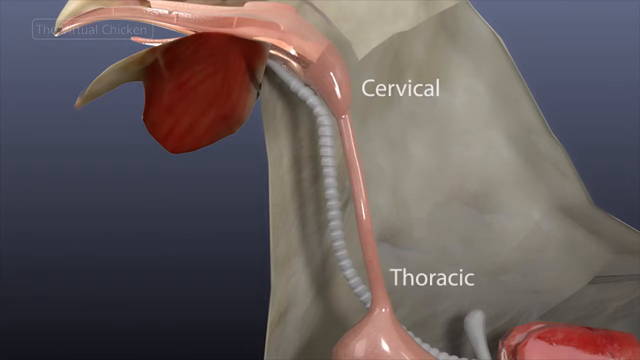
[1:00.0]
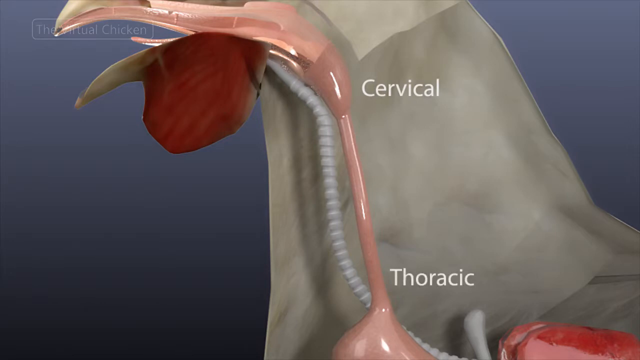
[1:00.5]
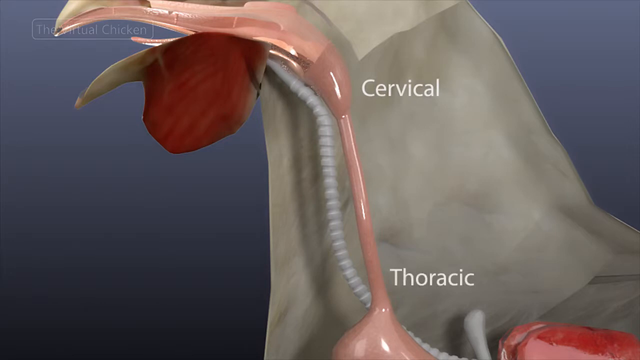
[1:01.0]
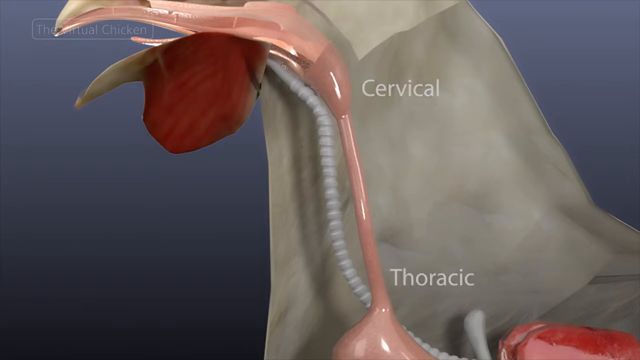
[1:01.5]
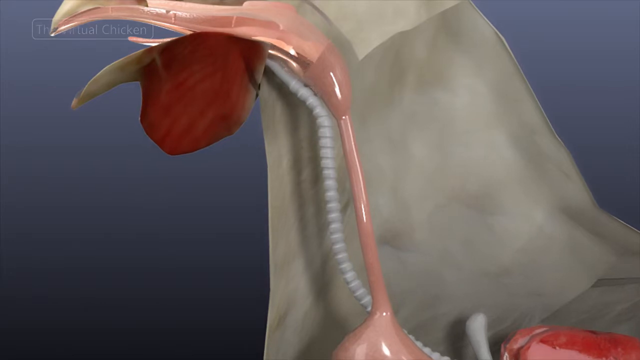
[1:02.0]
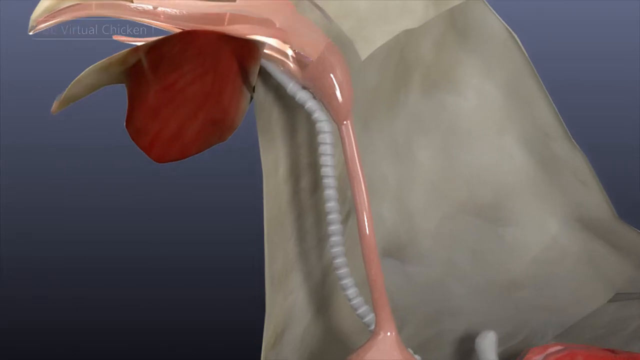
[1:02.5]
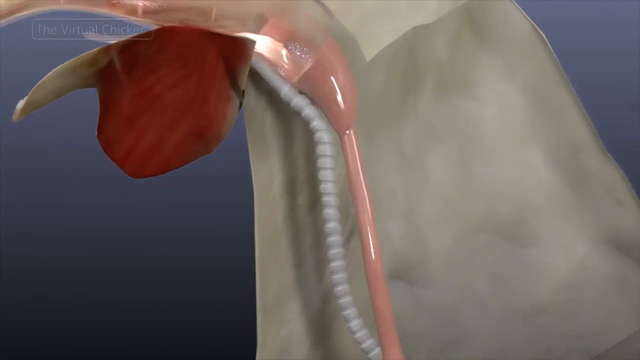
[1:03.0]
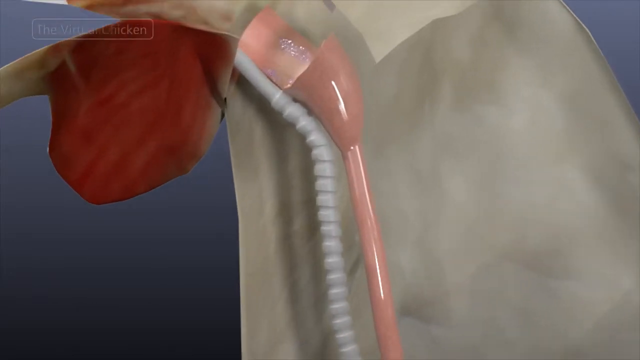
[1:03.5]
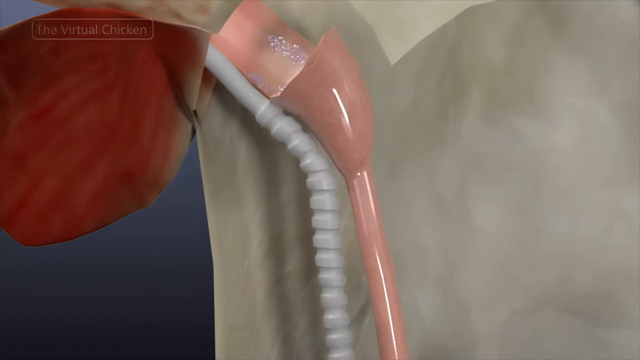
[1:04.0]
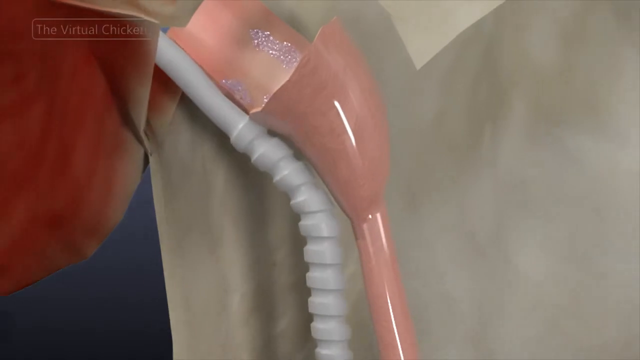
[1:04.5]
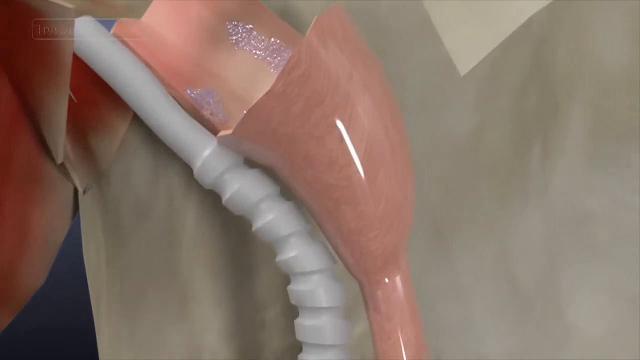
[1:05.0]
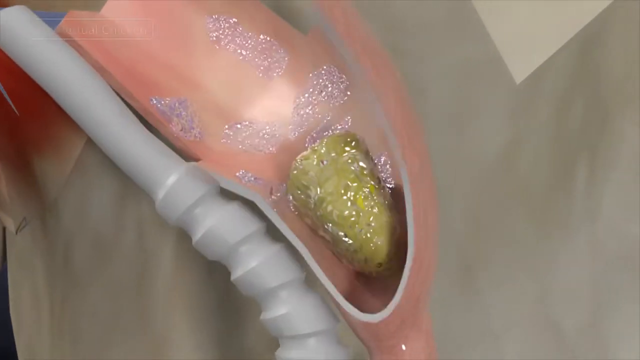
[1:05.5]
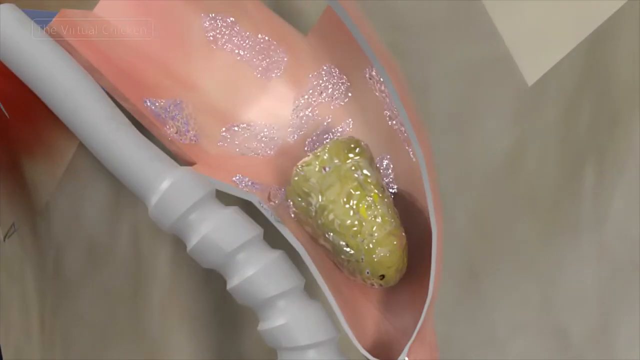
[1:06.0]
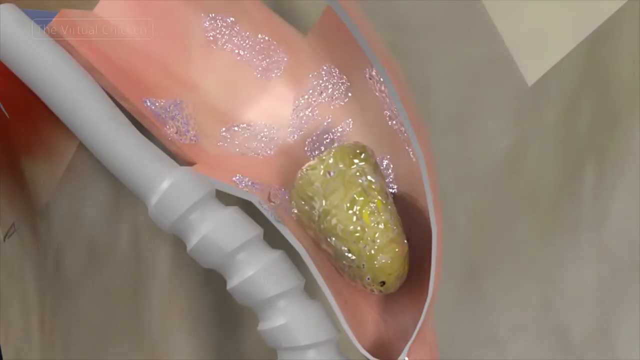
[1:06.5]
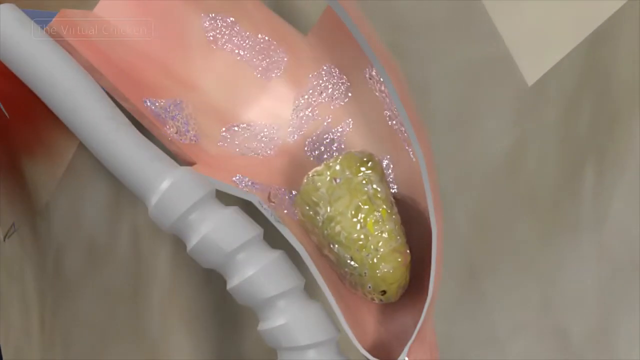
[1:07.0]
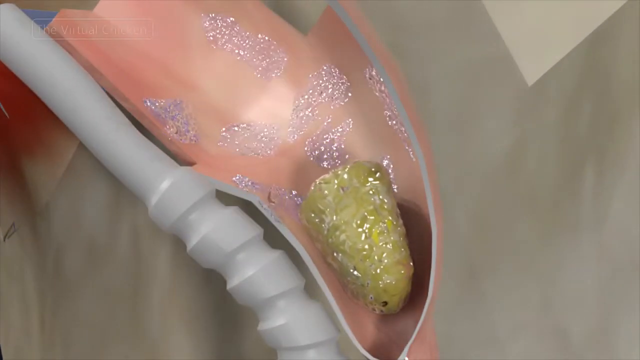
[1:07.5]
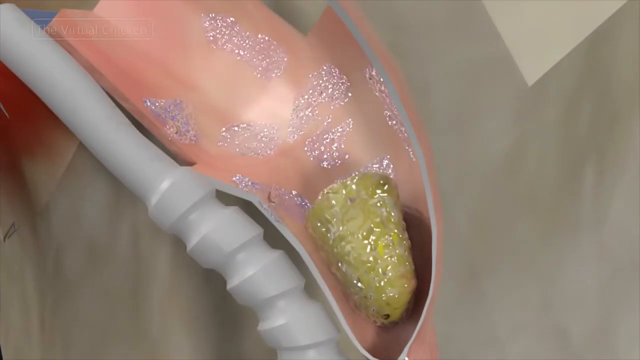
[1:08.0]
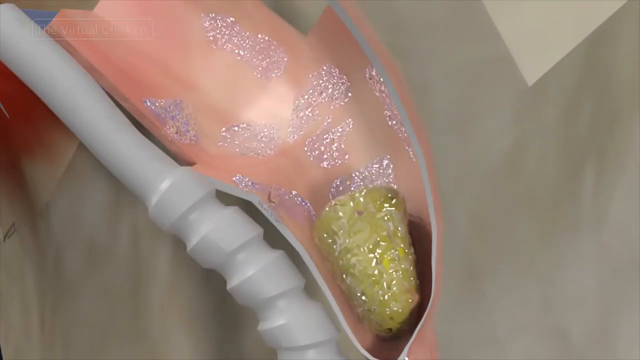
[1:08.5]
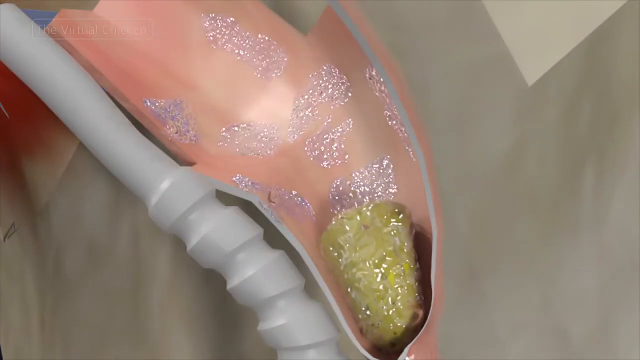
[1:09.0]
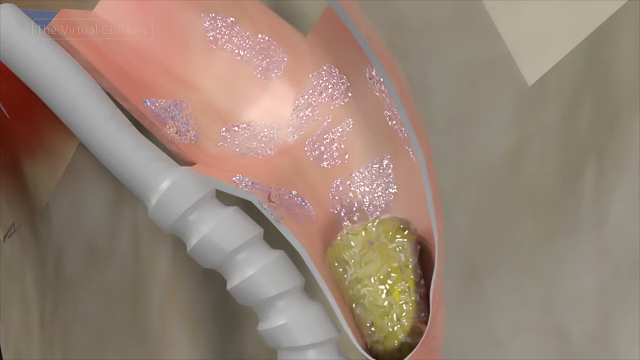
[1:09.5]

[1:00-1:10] A drawing of a chicken's head shows the virtual chicken eating something that goes through the throat past the glottis. The item looks big, seemingly too big for the throat, and it moves down slowly. Labels name each part, including the digestive tract and the esophagus. NC State University and the Department of Poultry Science are named.